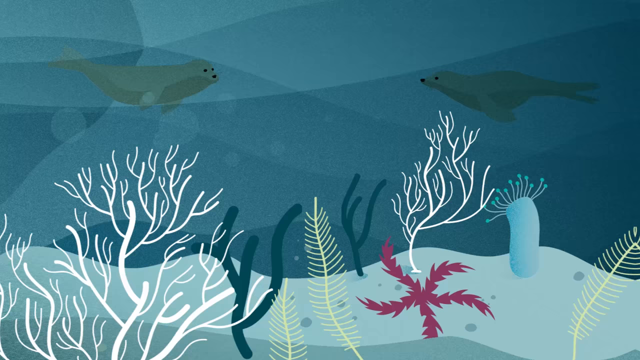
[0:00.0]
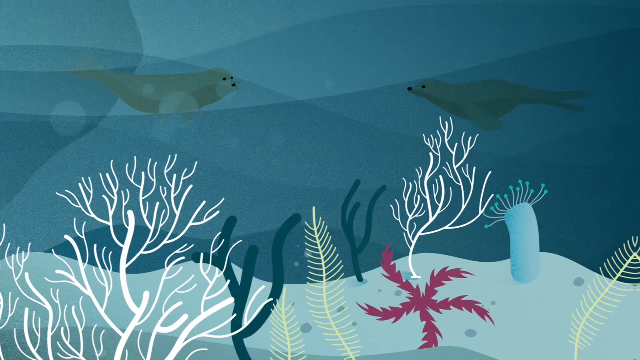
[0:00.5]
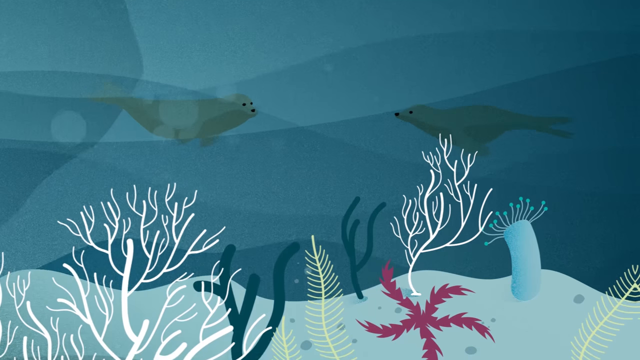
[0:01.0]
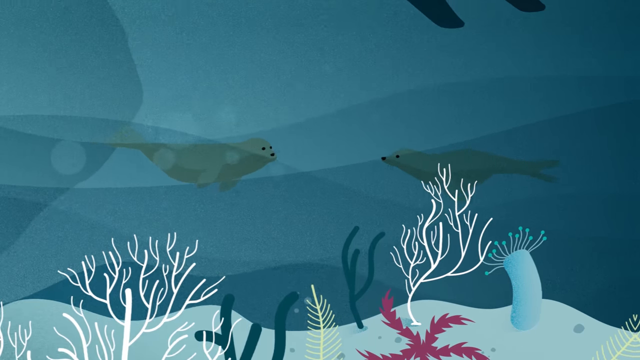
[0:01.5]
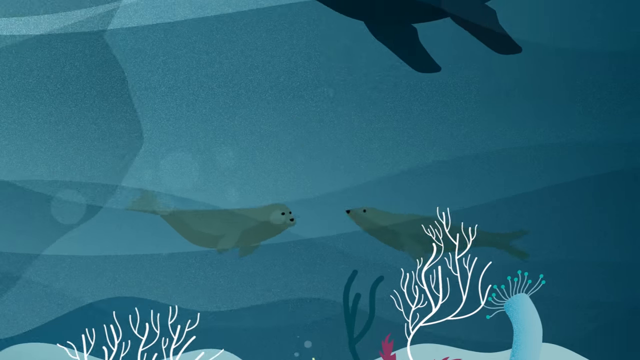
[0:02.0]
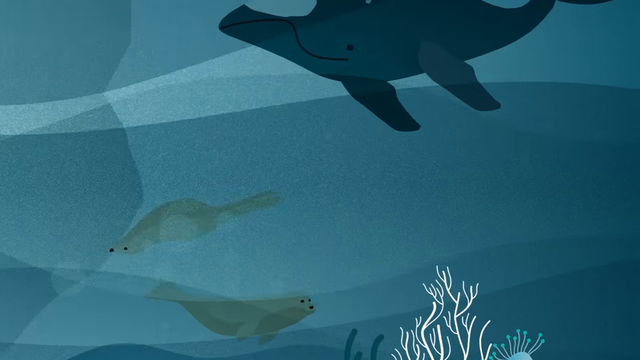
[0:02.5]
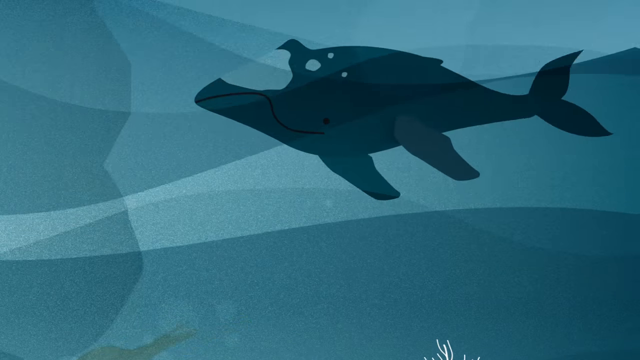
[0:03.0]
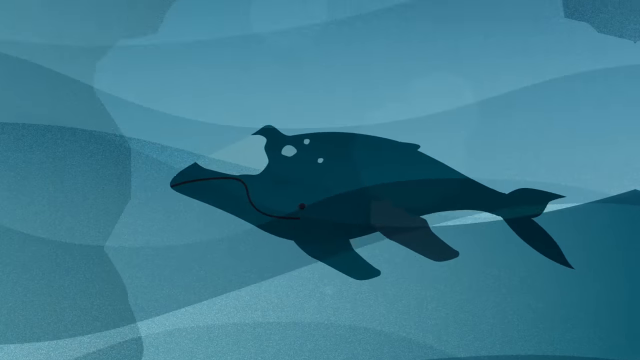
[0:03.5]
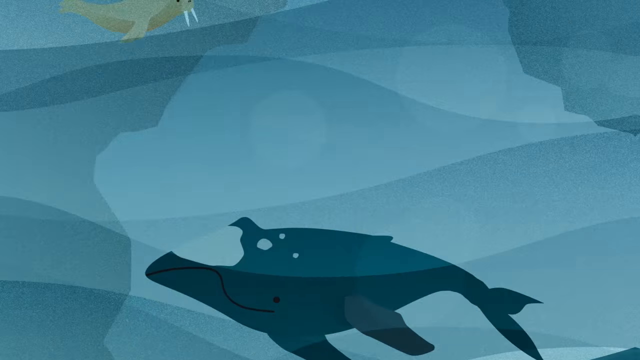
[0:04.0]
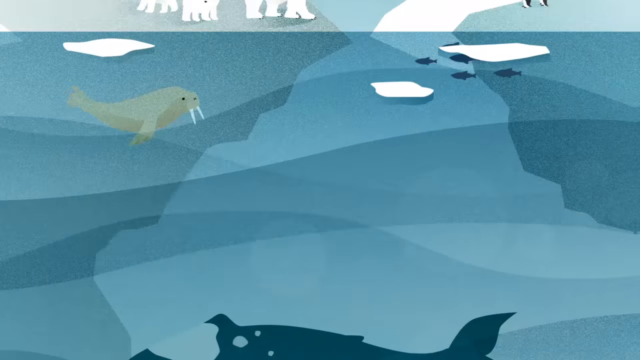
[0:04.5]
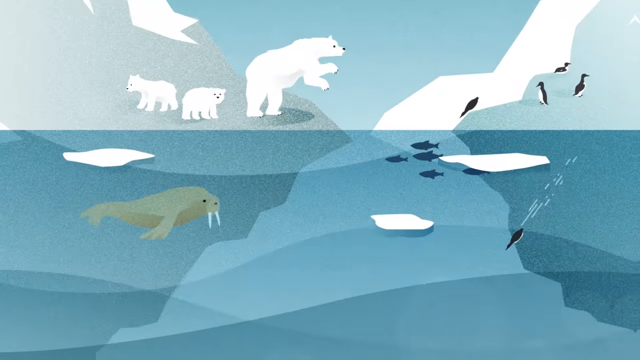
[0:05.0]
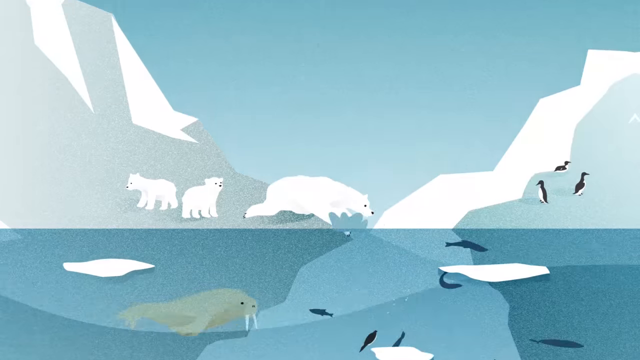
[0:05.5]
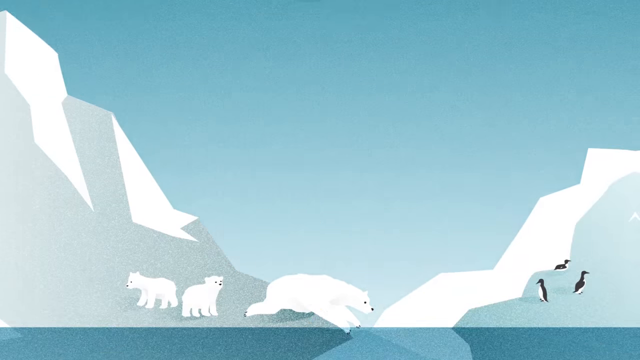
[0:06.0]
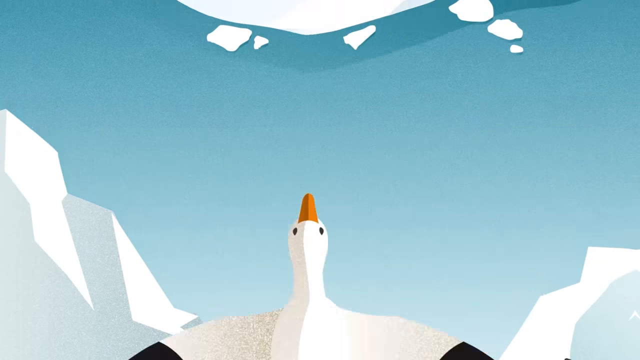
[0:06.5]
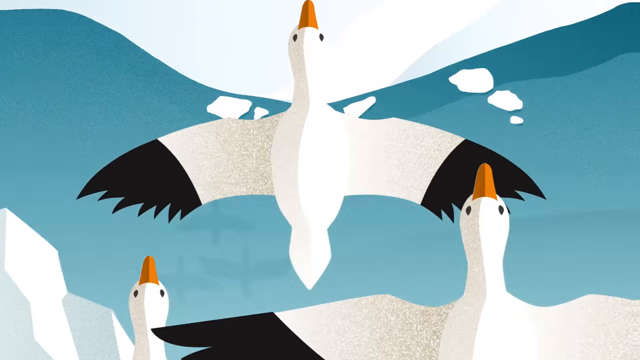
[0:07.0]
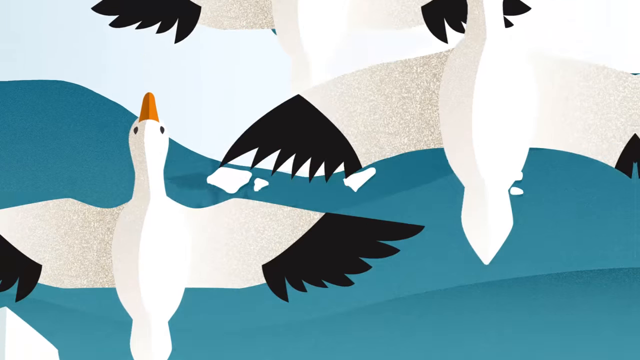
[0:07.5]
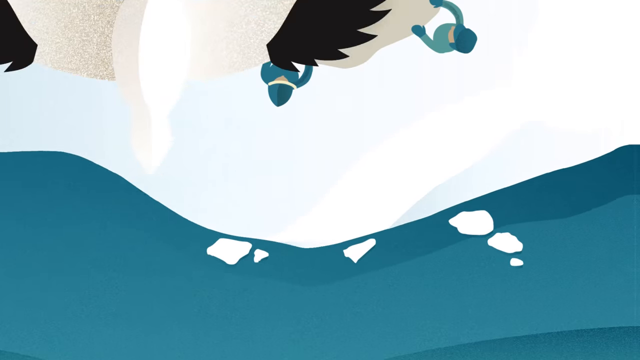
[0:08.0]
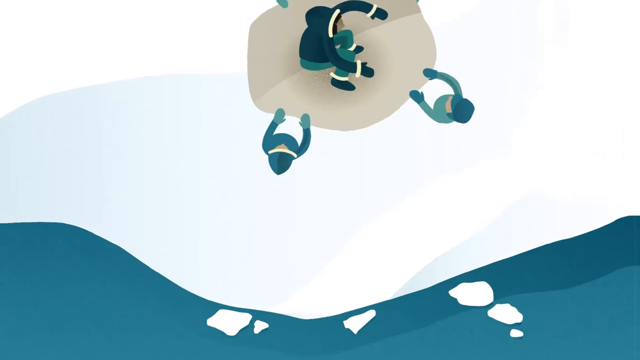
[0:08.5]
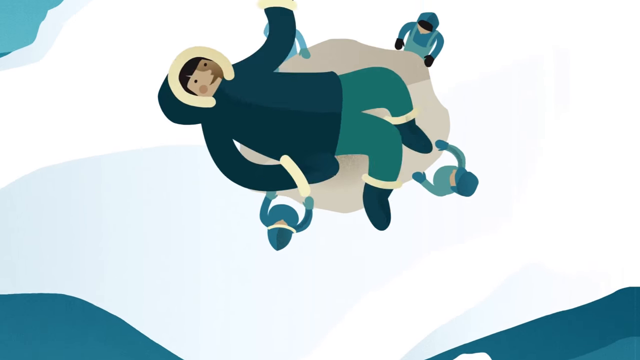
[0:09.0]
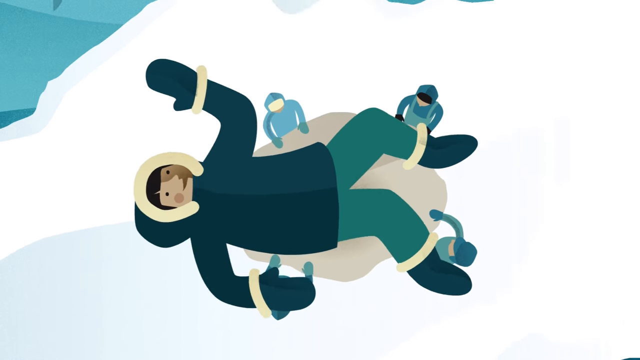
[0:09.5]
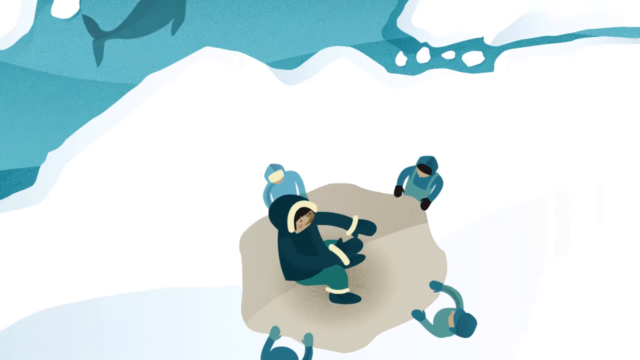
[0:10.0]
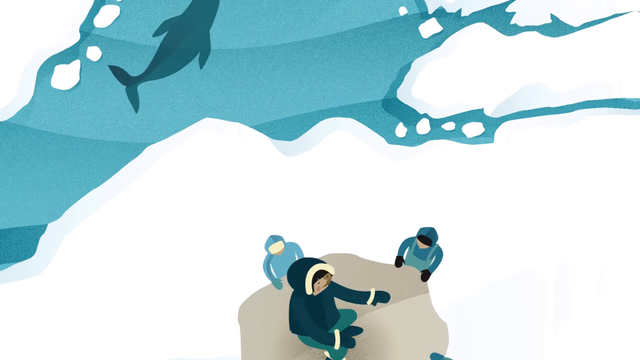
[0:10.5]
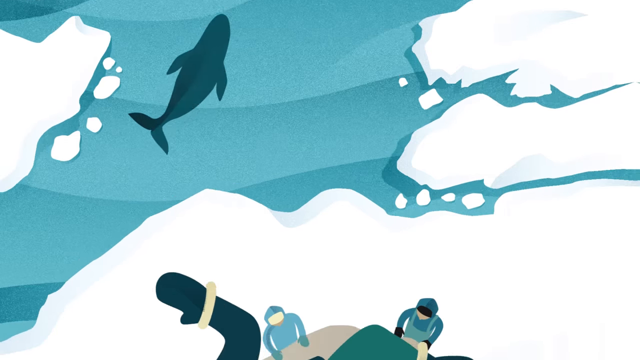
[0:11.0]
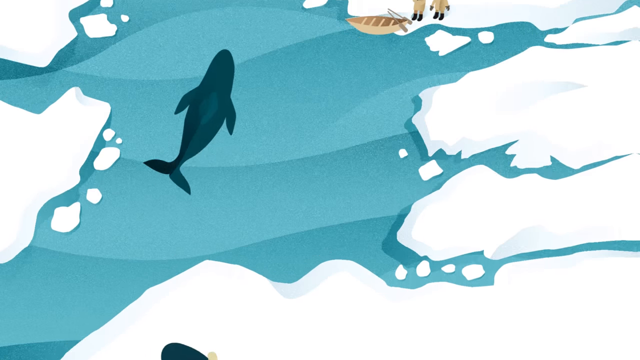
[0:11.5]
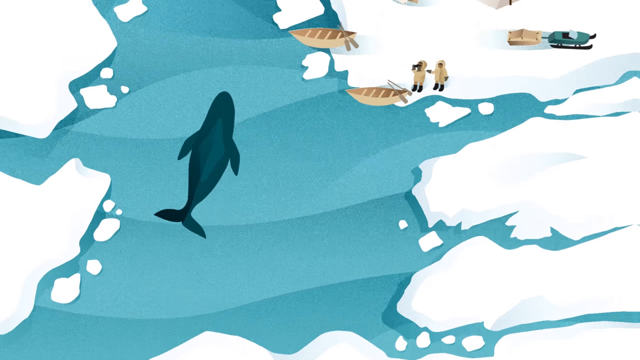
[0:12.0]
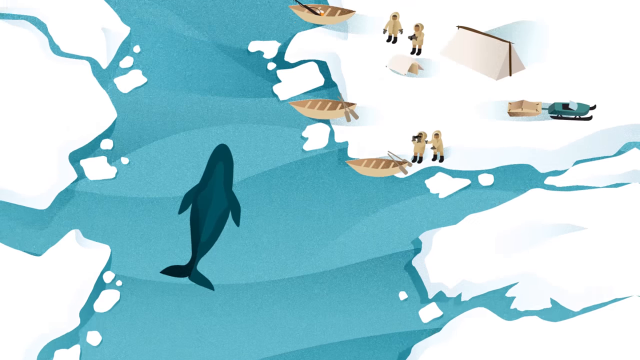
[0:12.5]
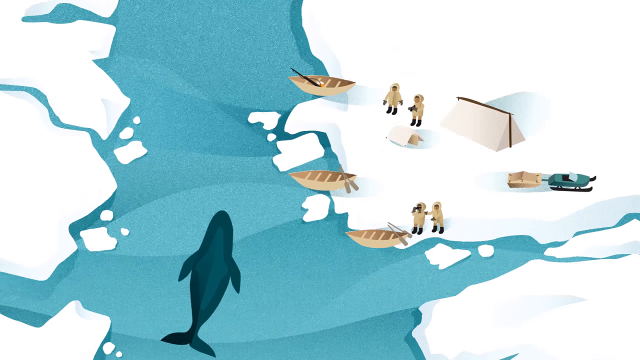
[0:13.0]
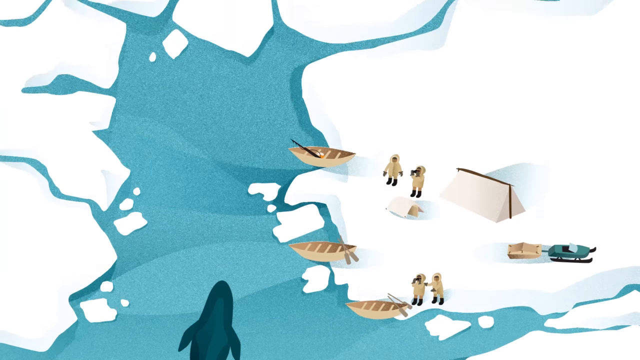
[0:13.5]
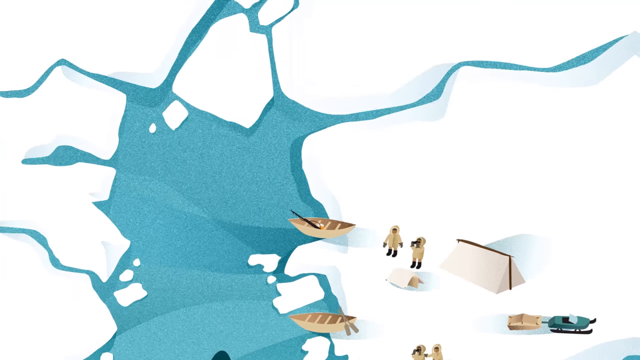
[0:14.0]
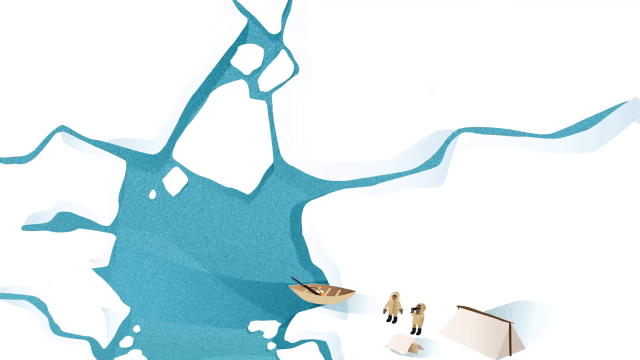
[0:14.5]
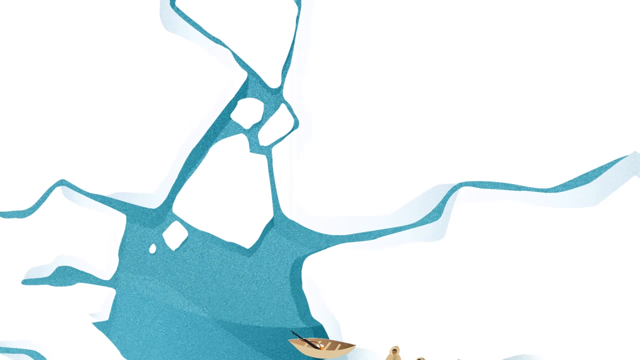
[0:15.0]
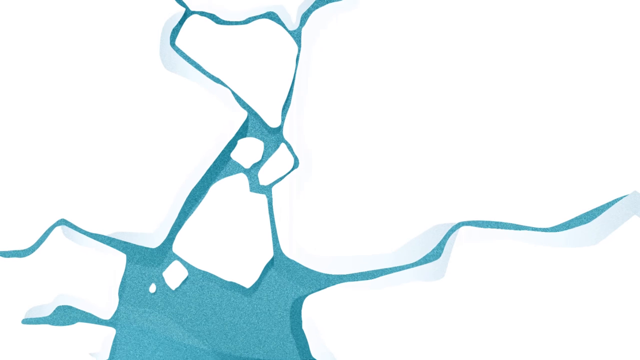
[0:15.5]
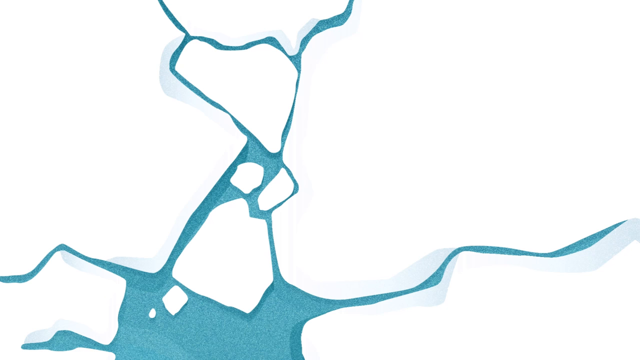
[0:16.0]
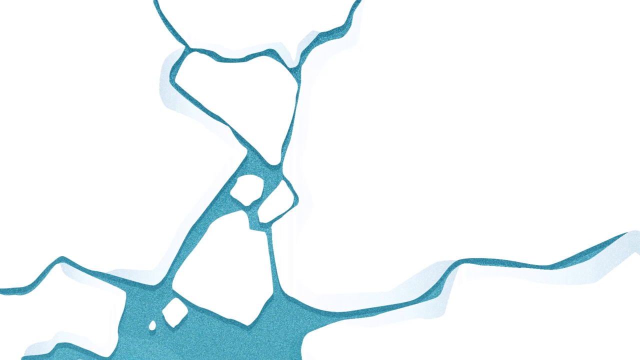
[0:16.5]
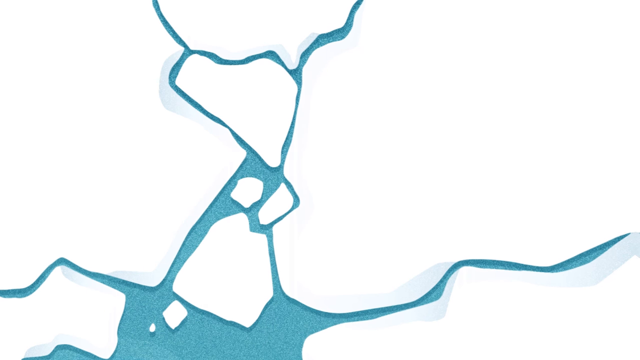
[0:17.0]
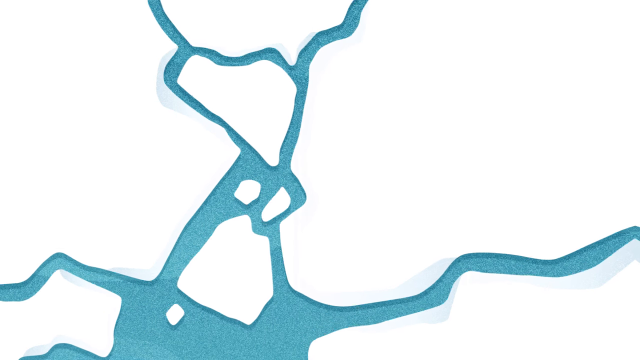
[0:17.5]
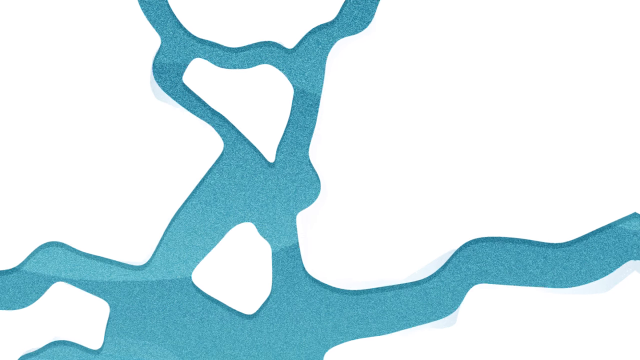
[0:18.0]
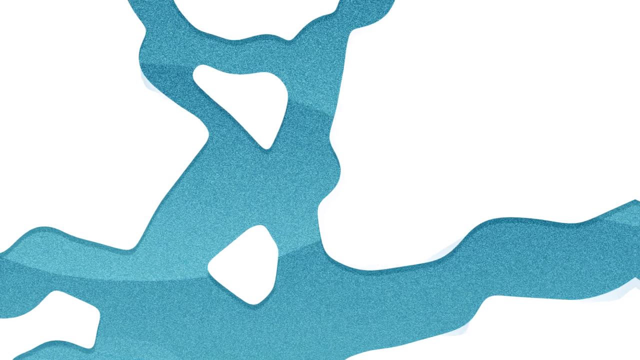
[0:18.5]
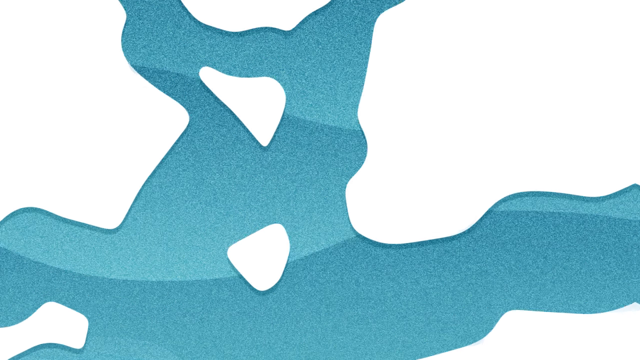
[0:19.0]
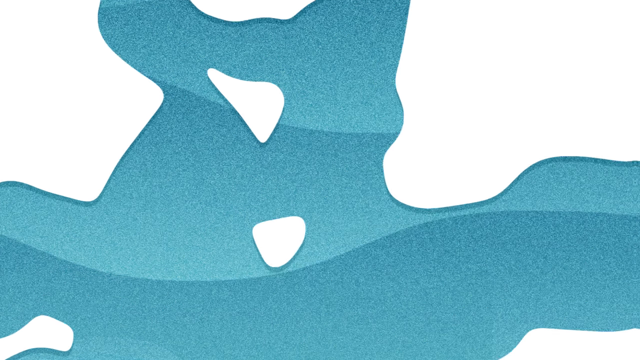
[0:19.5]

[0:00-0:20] A cartoon shows an underwater scene rendered in muted shades of aqua, white and a little red. The view is open underneath the sea, which may be an Arctic sea. Two seals swim, an orca whale floats above, and there is a walrus with tusks. Overhead, snow geese fly in formation. Moving up through the waves, the view comes to a polar bear with a baby at the water's edge, then to icebergs. Eskimo children play together, and as the camera pans upward, more Eskimos are standing near the water's edge, between a tent and some kayaks. A whale-like creature makes its way through one of the channels. As the camera continues to pan upward, the ice begins to thin out, the white of it narrowing as the blue ocean water rises up and grows wider.